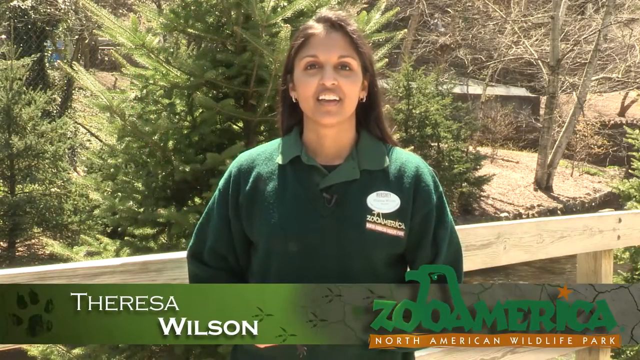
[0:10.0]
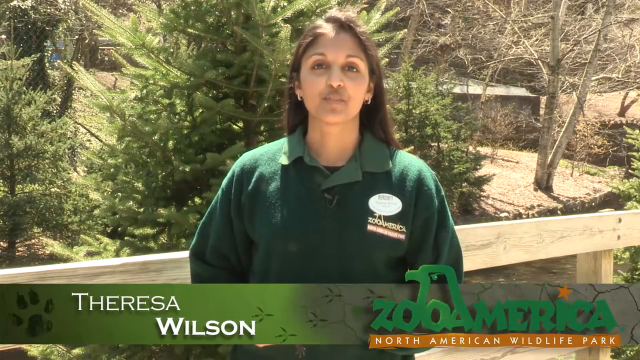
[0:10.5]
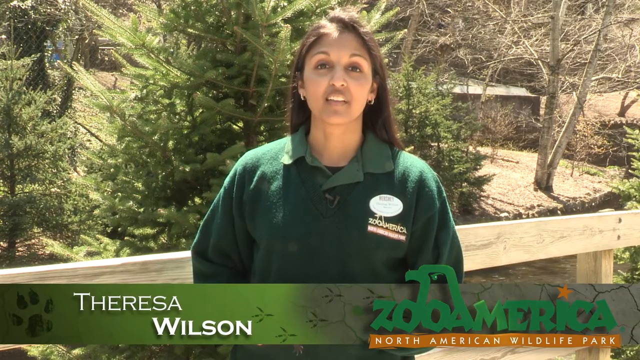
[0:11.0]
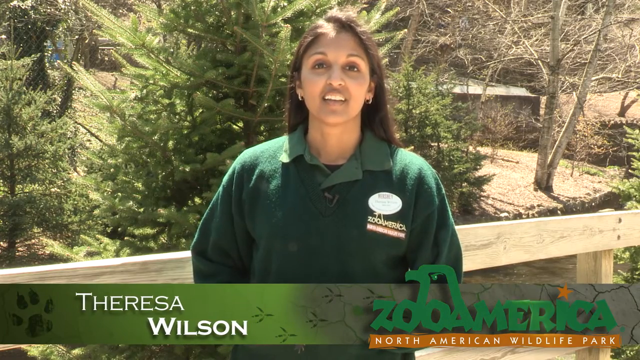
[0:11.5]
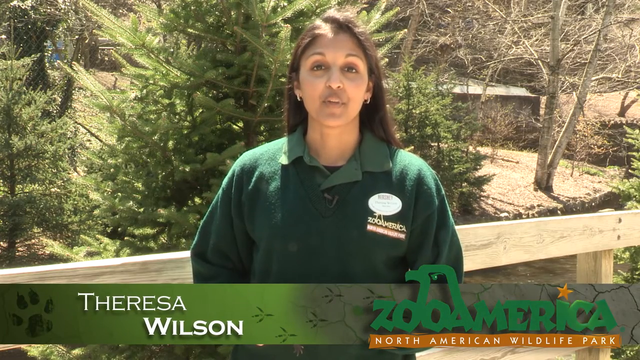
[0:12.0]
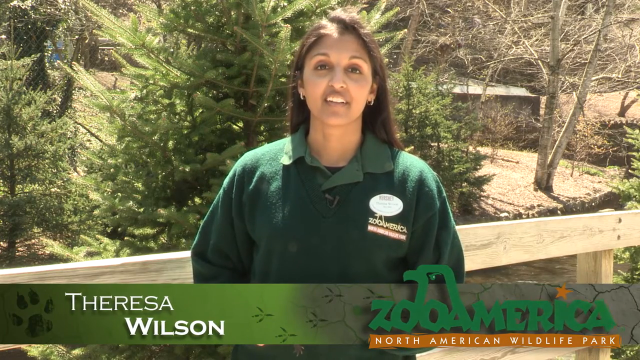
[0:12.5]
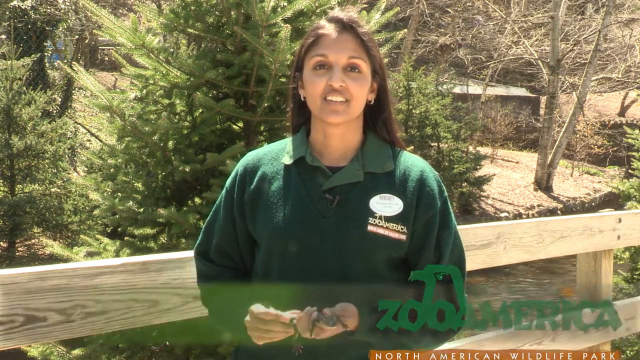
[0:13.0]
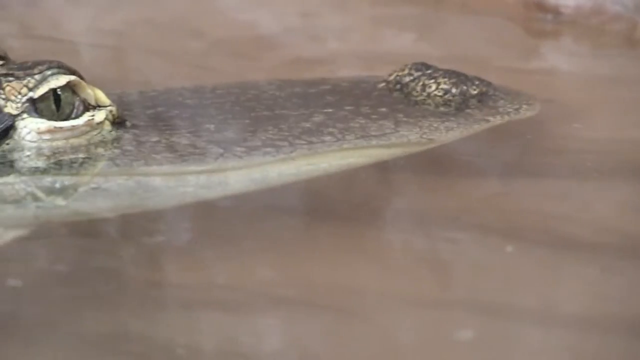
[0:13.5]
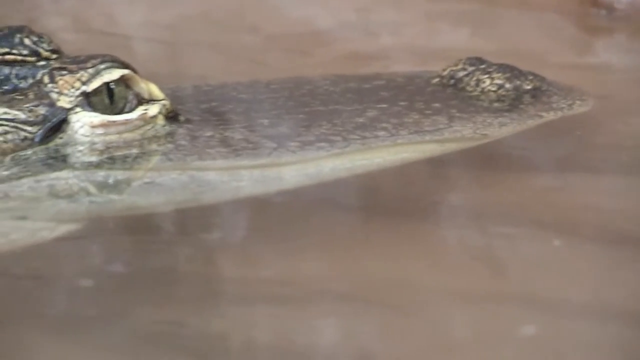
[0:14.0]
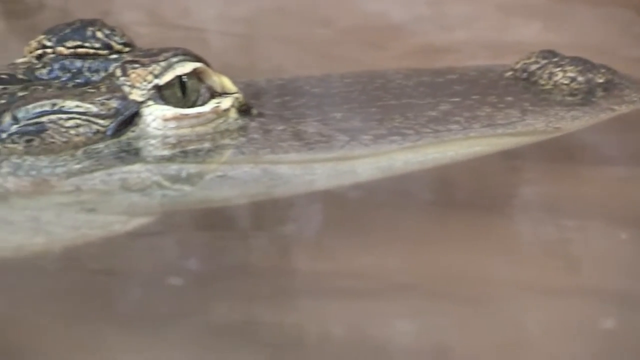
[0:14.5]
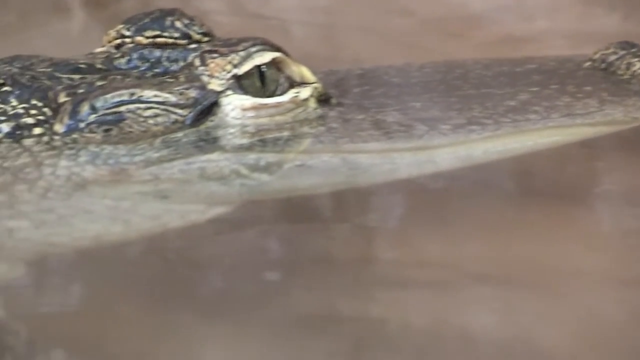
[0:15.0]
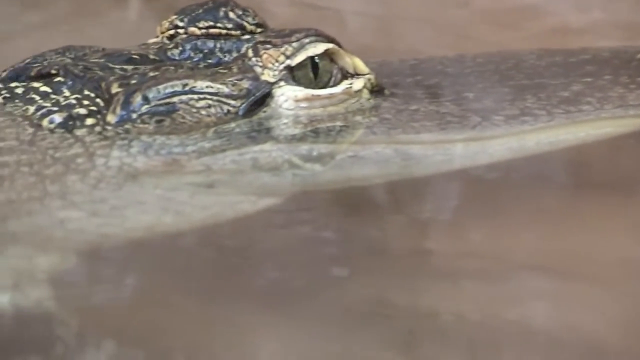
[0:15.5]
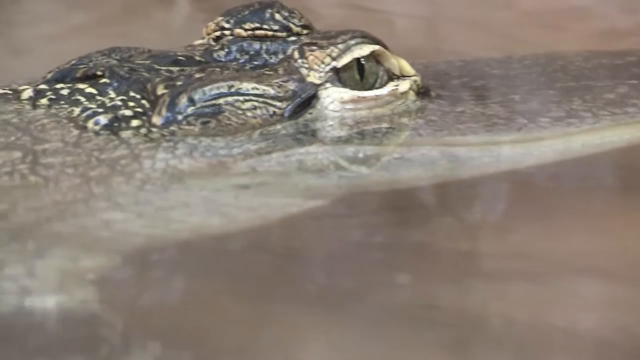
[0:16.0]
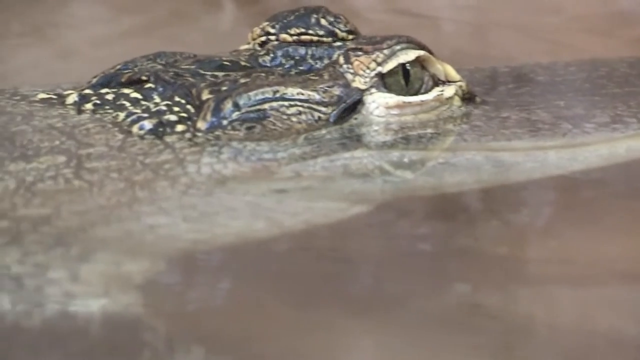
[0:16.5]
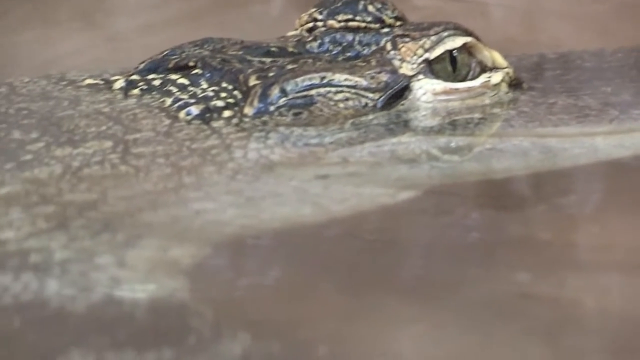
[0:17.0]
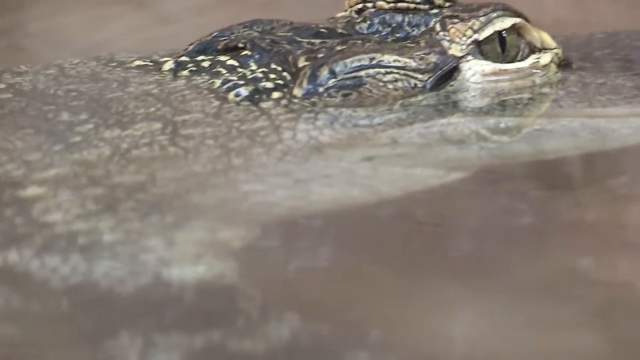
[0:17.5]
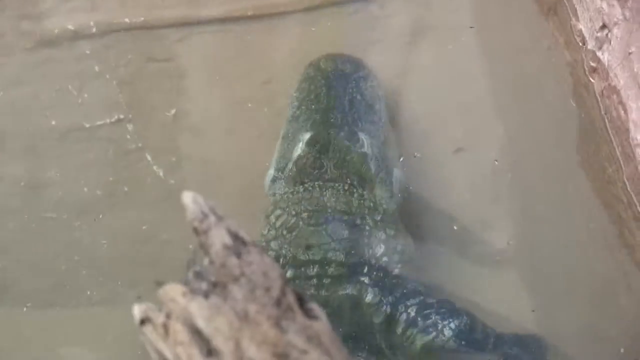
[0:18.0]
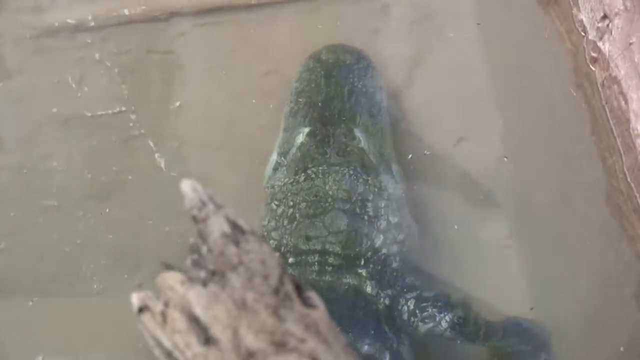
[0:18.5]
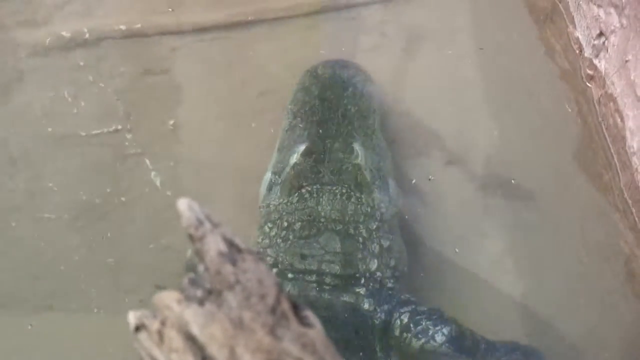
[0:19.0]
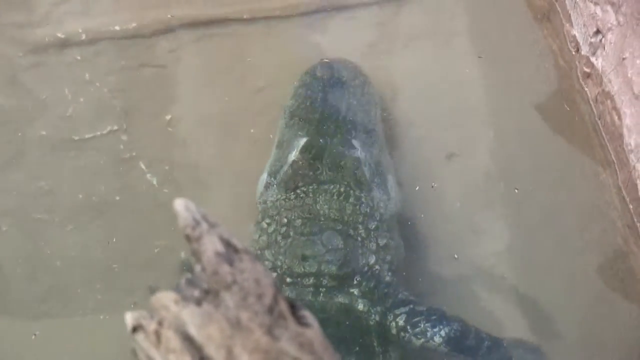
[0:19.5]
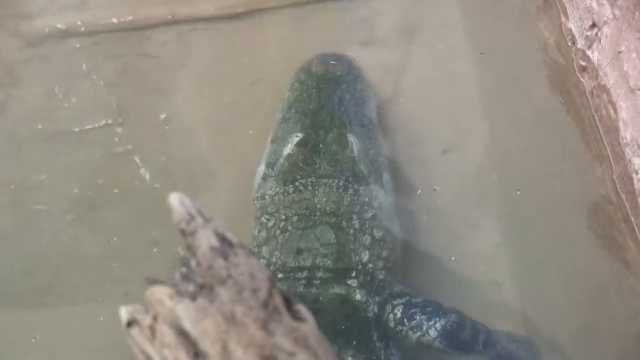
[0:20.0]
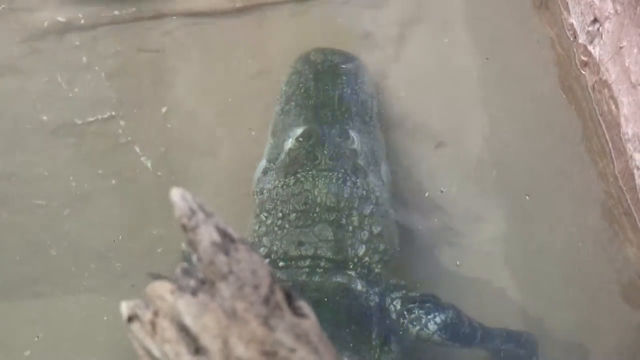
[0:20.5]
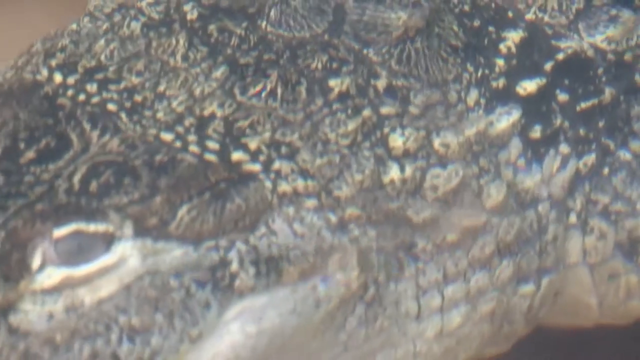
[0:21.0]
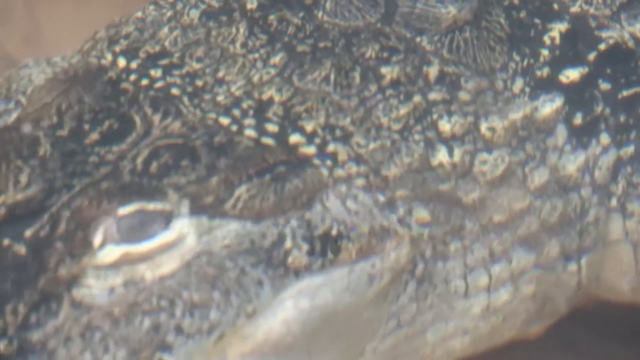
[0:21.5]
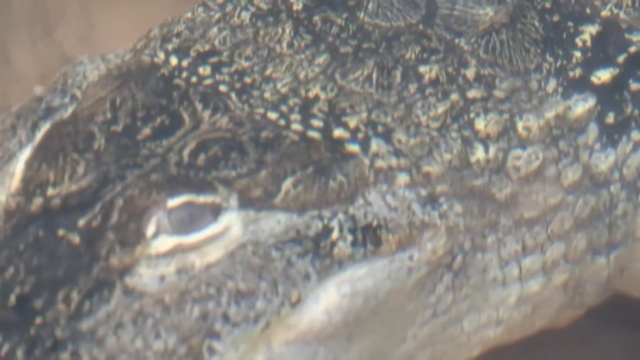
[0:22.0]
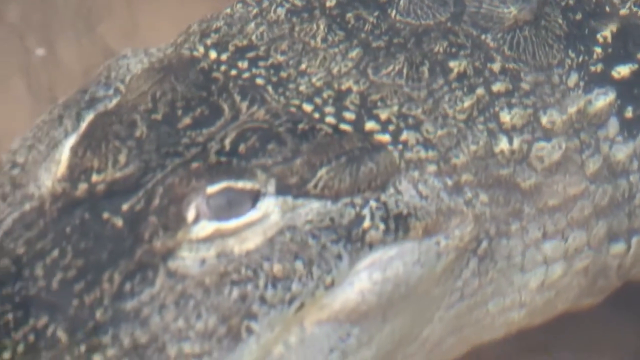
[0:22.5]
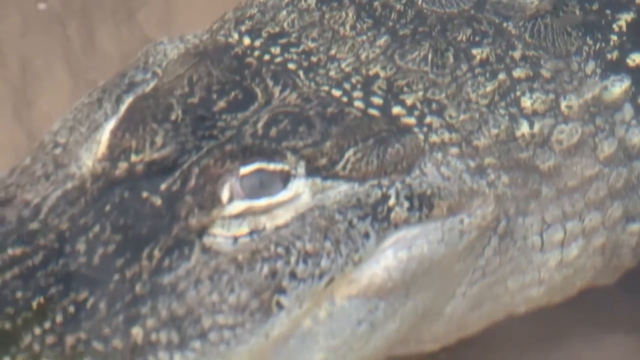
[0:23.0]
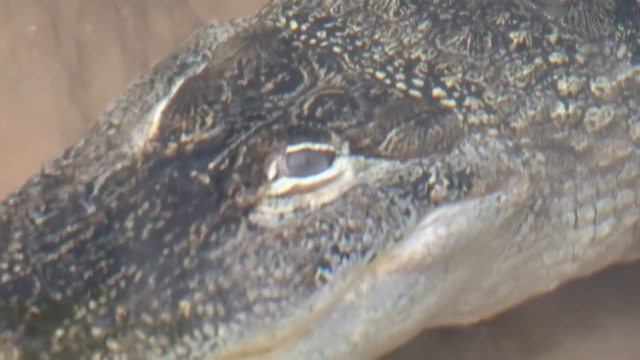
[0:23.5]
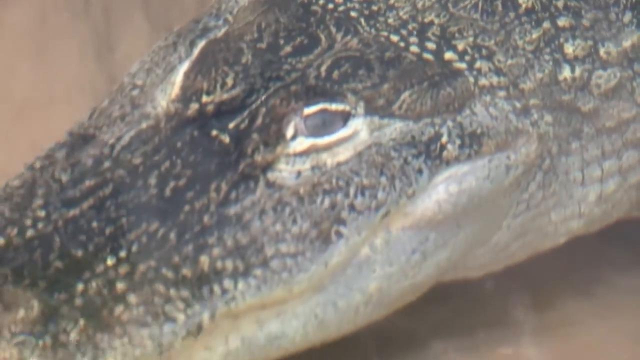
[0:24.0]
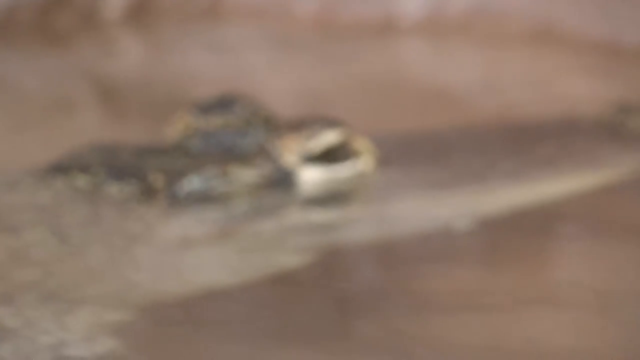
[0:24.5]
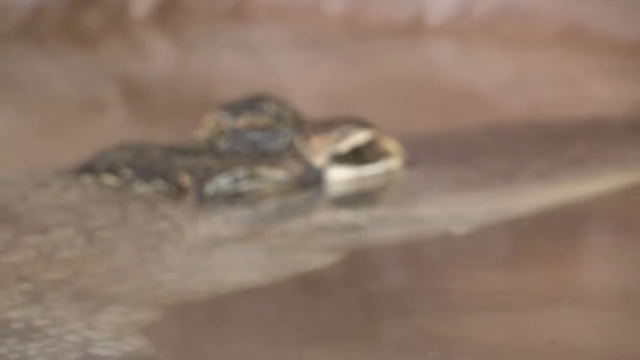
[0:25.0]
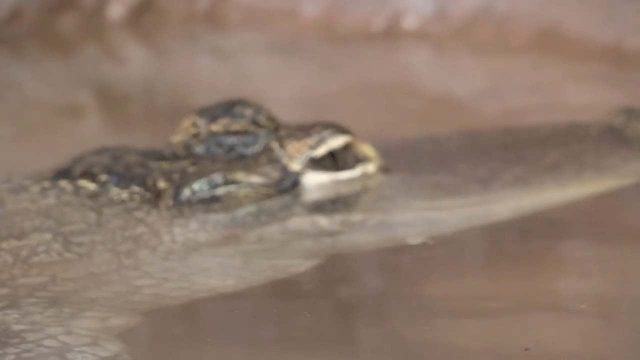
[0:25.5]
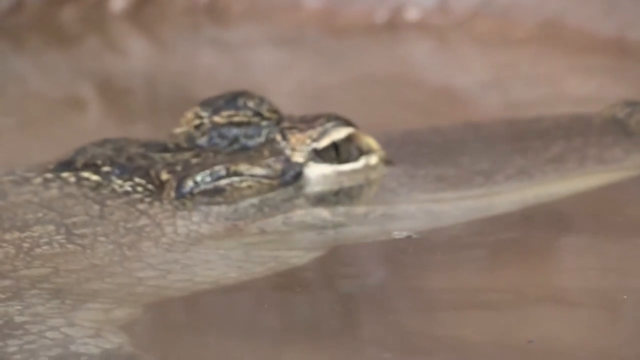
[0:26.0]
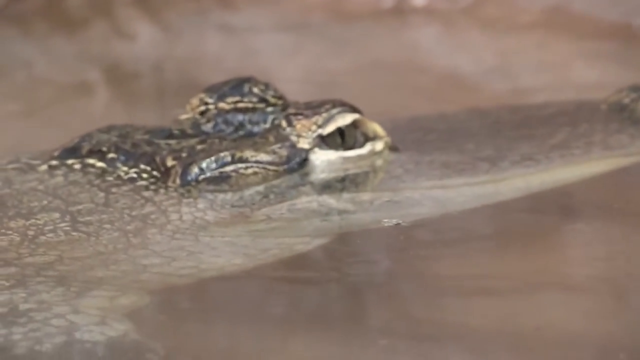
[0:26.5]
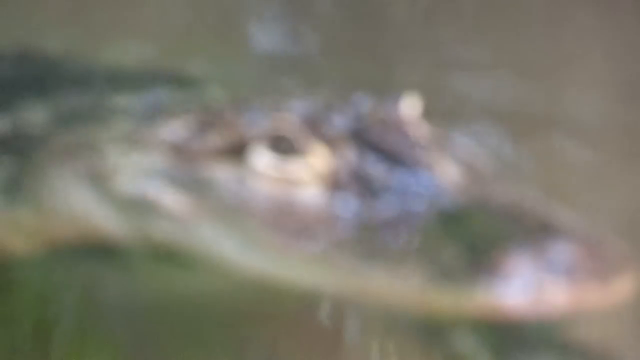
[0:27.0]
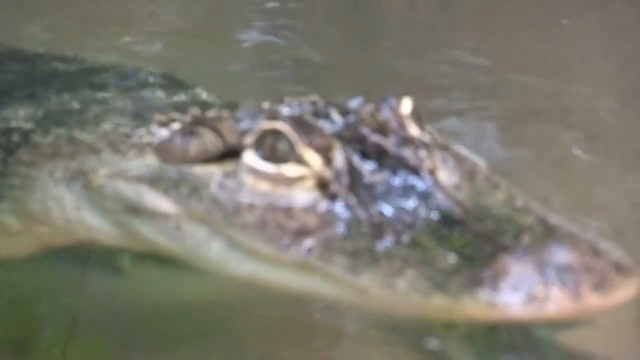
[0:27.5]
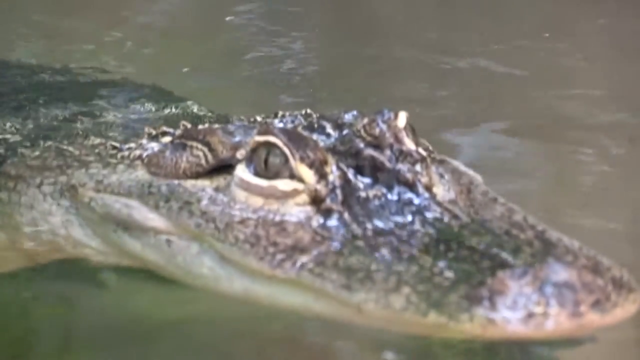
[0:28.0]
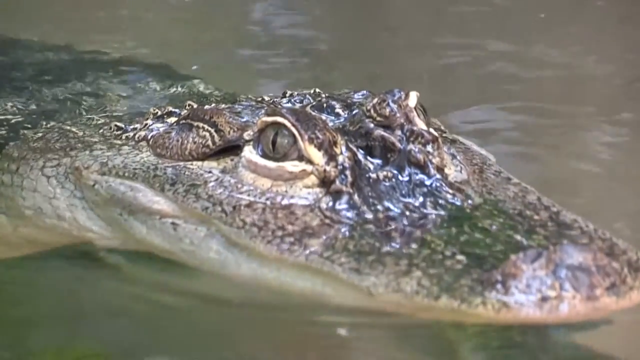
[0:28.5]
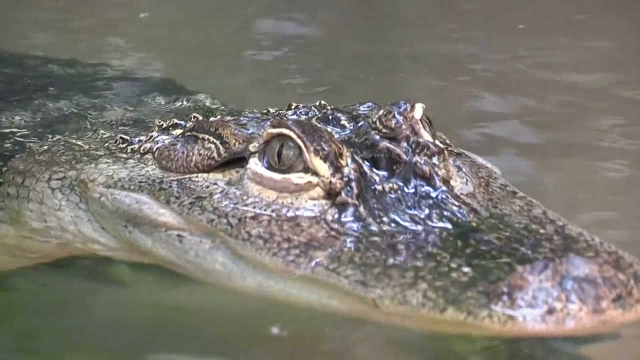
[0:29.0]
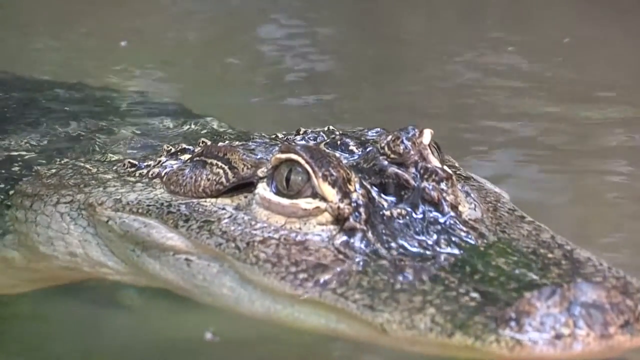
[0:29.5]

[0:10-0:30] Theresa Wilson, who works for Zoo America North American Wildlife, talks to the camera. An American alligator is then shown seemingly sitting still underwater, with several screen transitions showing it from different angles. The shots move between the woman and the alligator, and the setting changes a few times, mostly to different angles of the alligator.